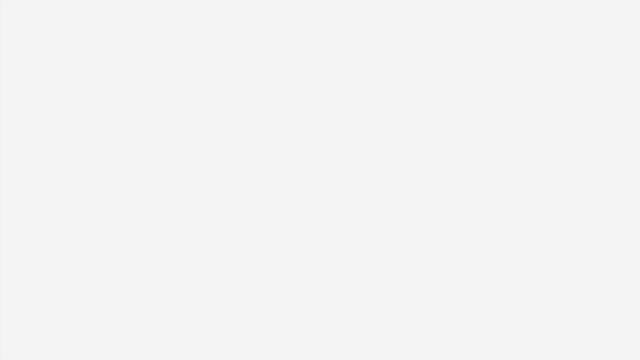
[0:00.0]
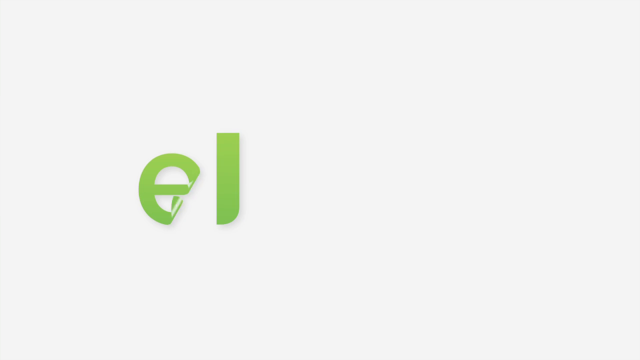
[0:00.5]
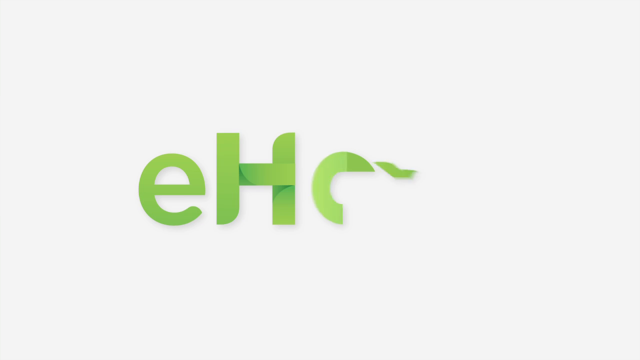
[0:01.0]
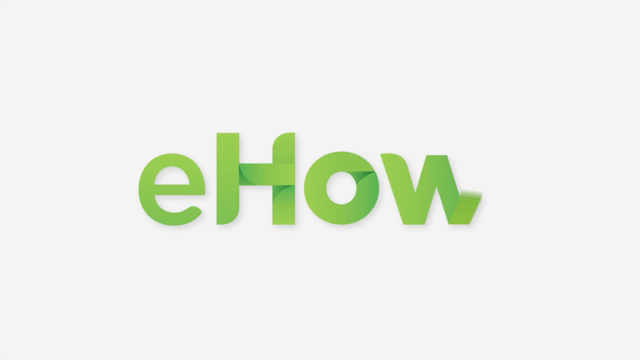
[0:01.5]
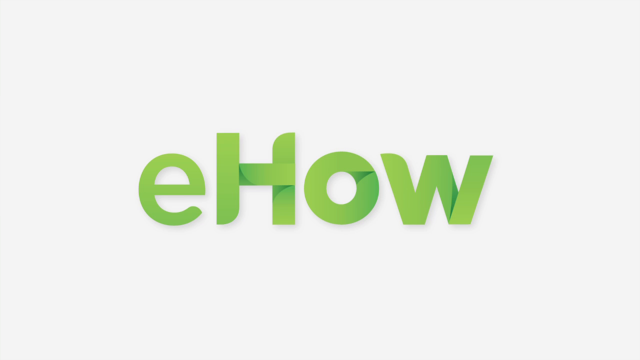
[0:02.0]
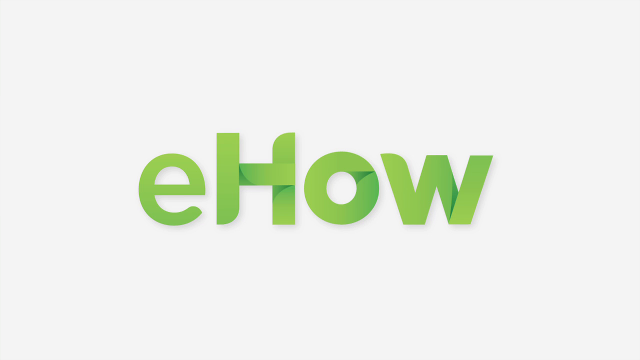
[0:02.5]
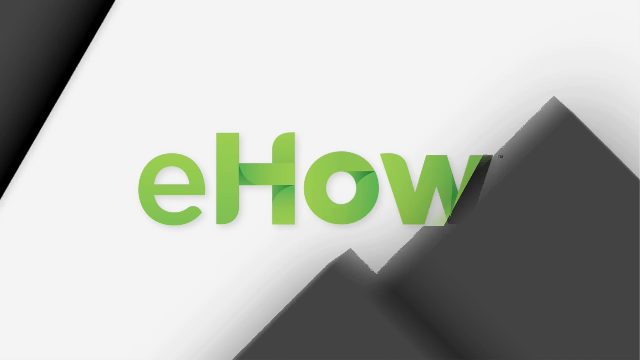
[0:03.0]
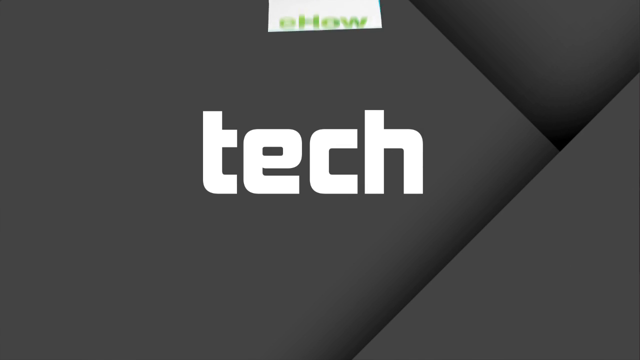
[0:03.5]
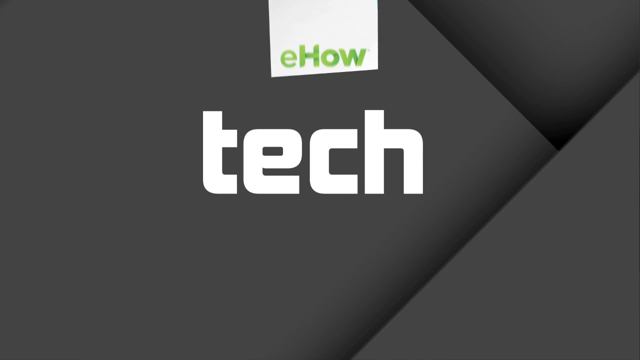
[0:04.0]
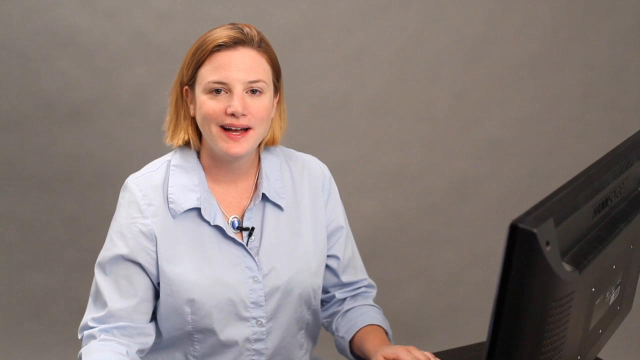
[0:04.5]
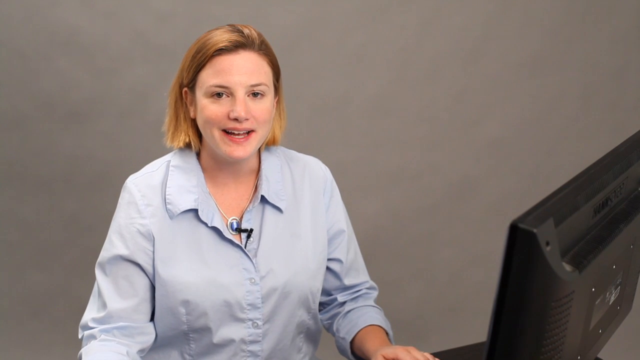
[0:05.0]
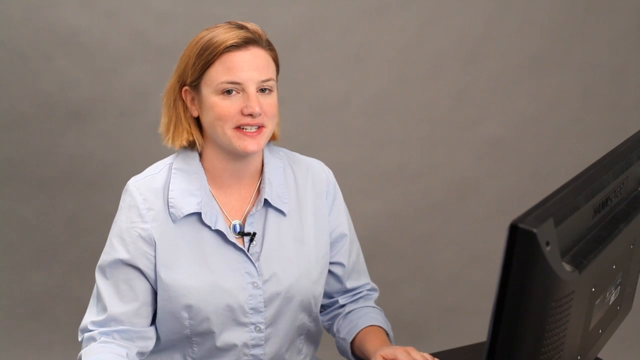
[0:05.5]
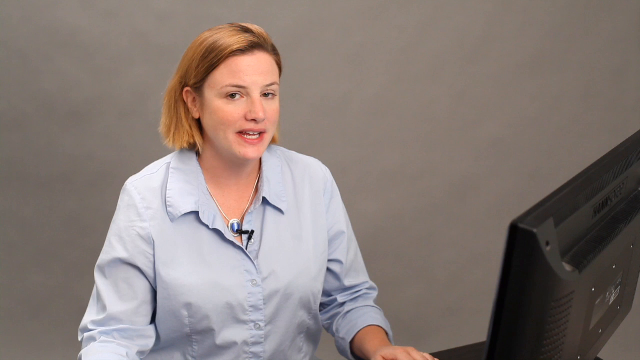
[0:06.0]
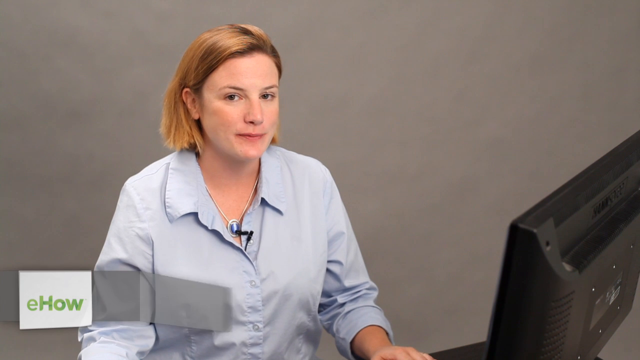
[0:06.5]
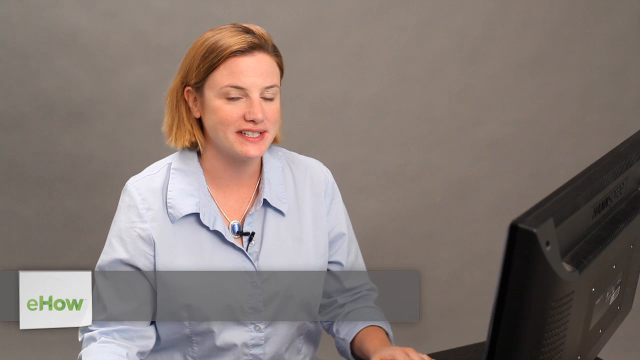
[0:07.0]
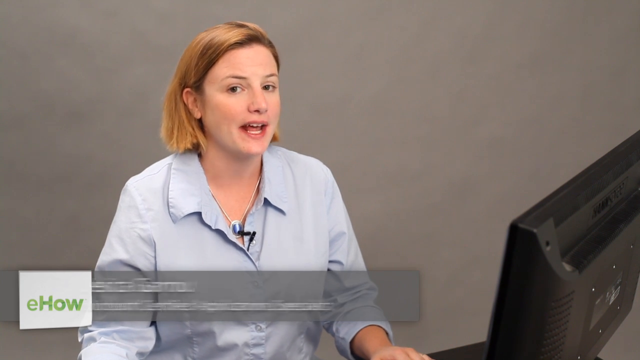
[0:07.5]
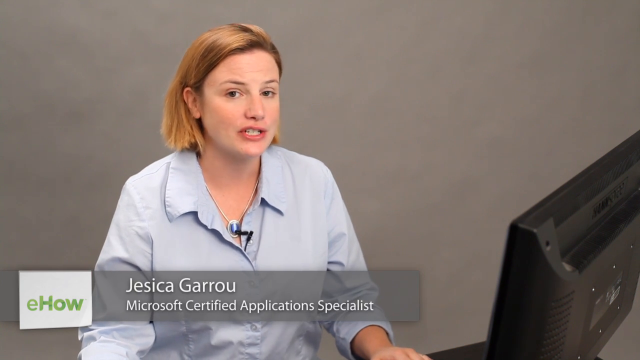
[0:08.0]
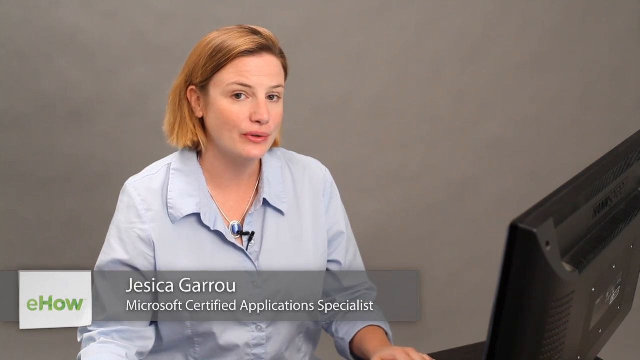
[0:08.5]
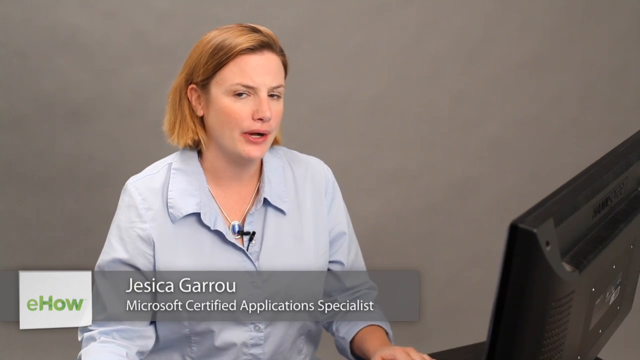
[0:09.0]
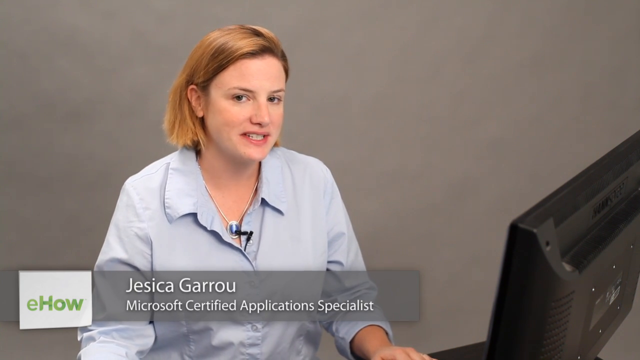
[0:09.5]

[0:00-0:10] The video opens on a completely white, empty background. Suddenly a bunch of green letters, an e, an h, an o and a w, come flying in and form the word "ehow". The screen then transitions to a black background made of various folds, which displays the word "tech" before transitioning to a host. The host is named Jessica Garrow, and she is a Microsoft Certified Application Specialist.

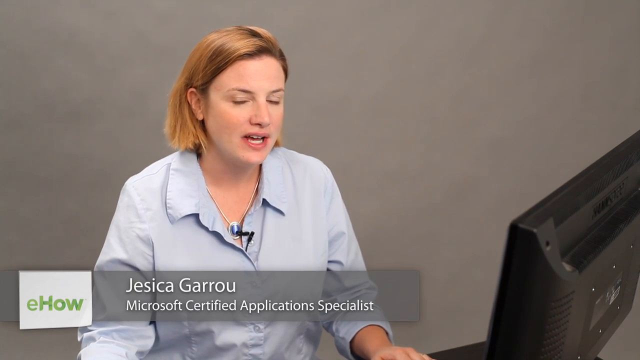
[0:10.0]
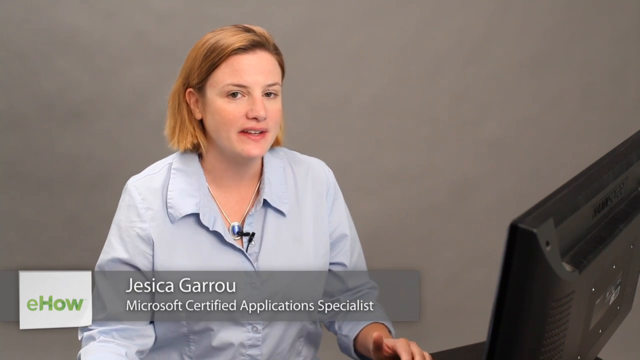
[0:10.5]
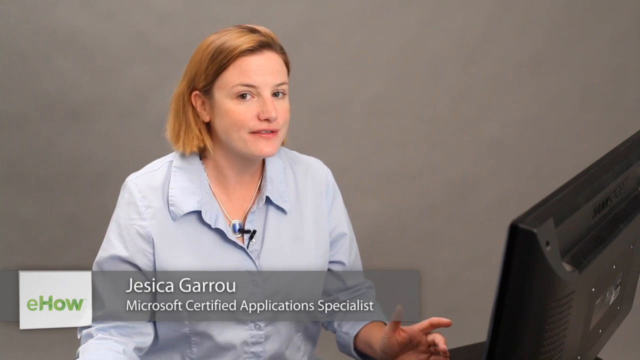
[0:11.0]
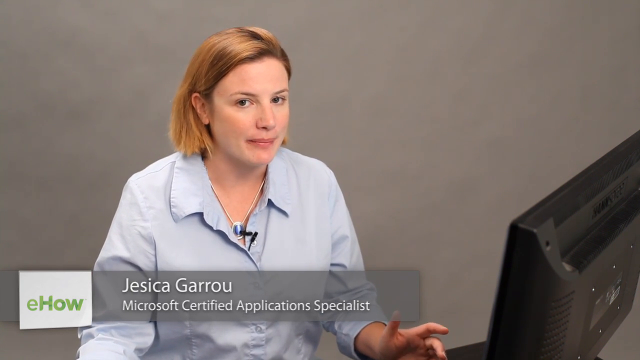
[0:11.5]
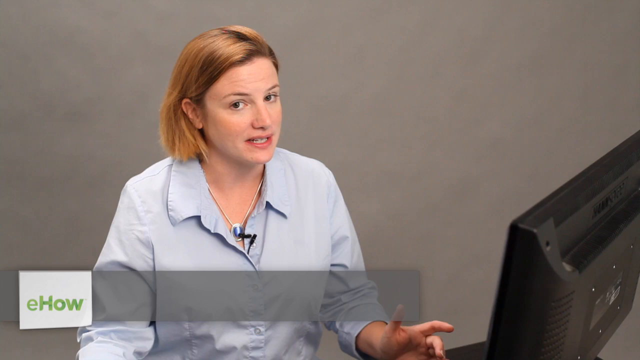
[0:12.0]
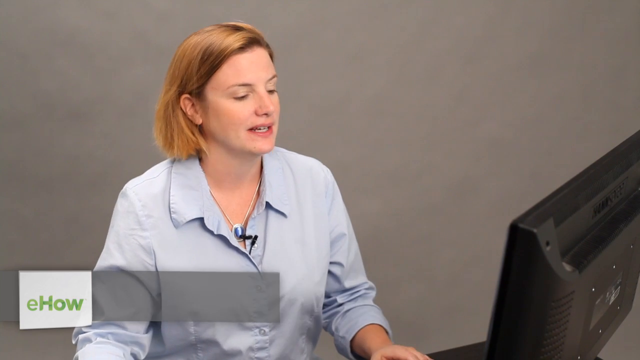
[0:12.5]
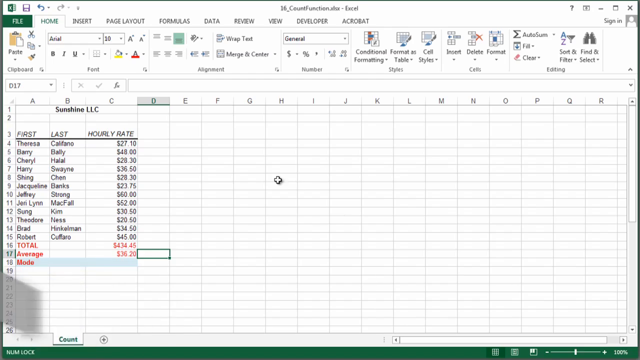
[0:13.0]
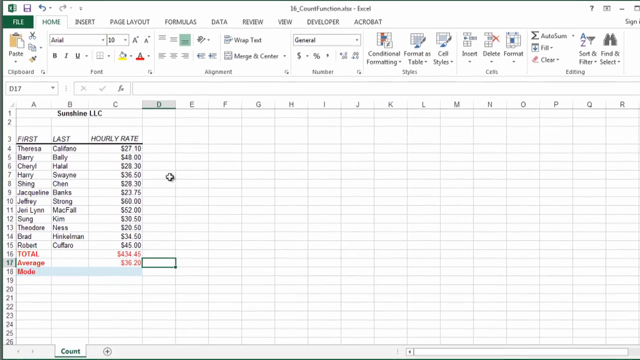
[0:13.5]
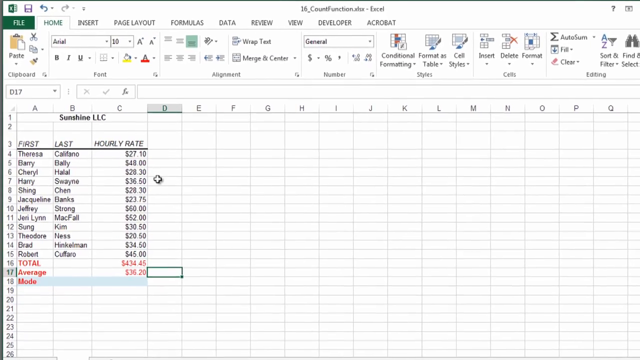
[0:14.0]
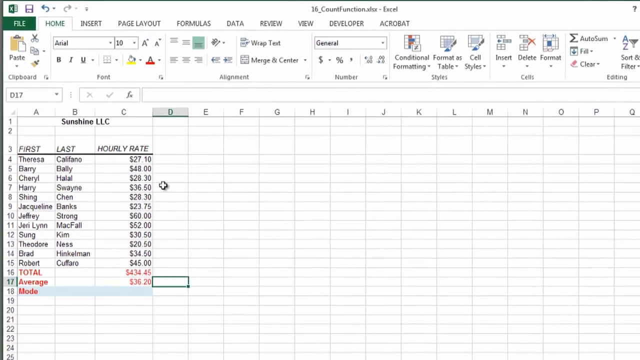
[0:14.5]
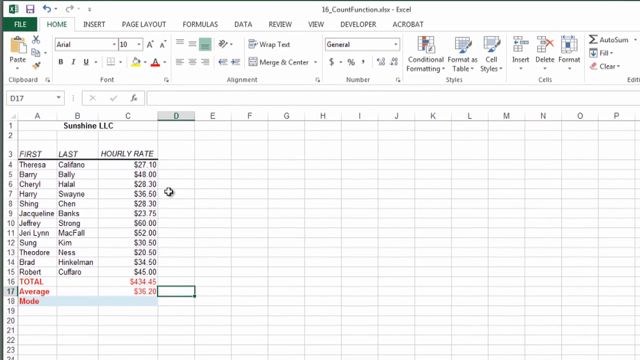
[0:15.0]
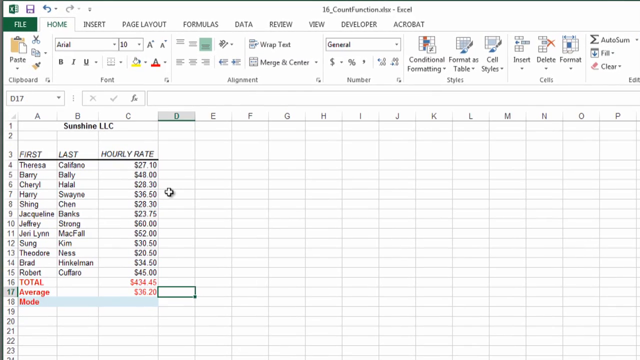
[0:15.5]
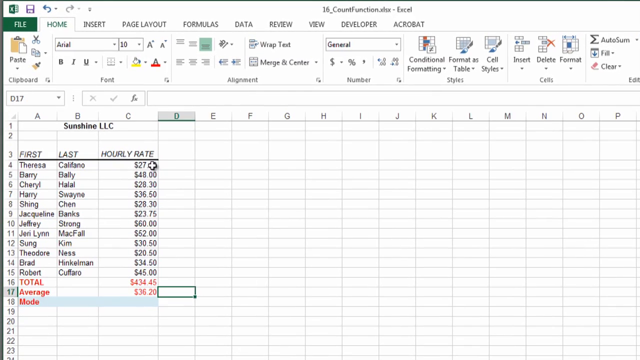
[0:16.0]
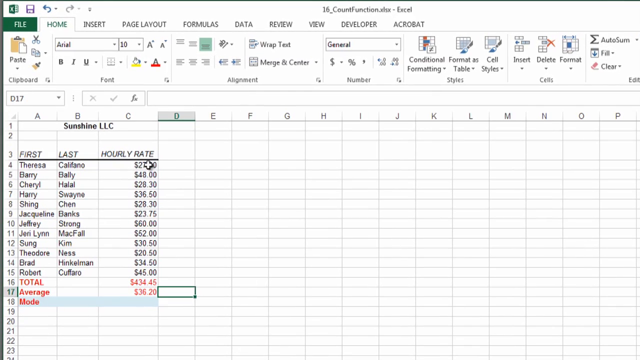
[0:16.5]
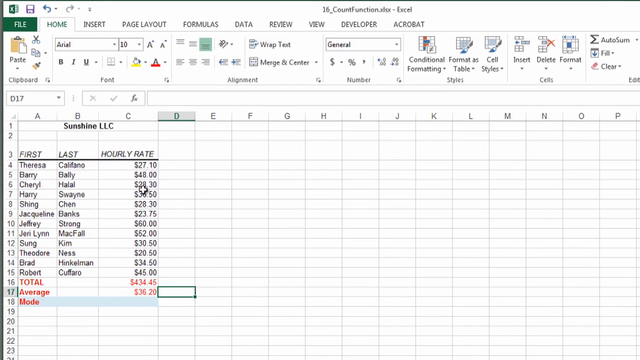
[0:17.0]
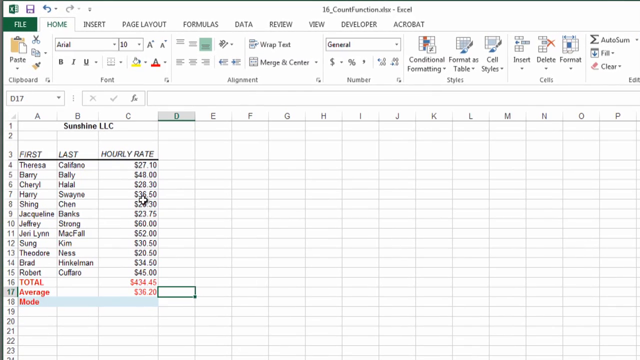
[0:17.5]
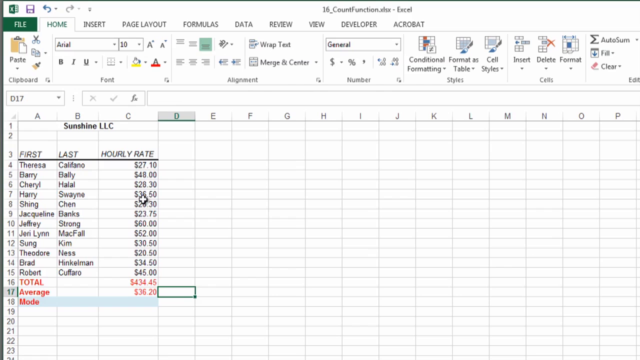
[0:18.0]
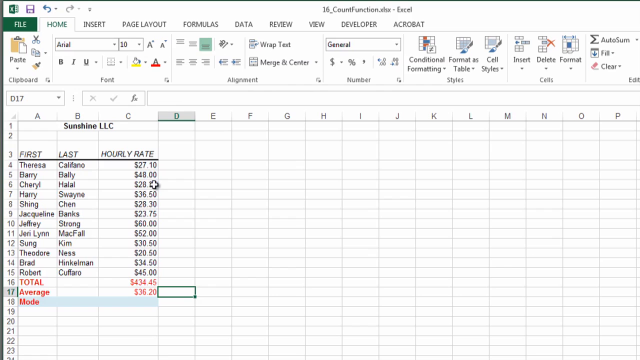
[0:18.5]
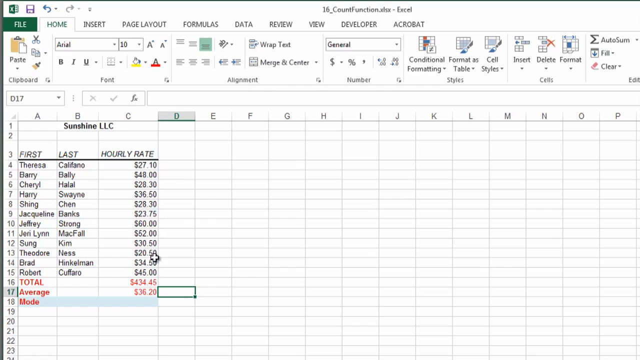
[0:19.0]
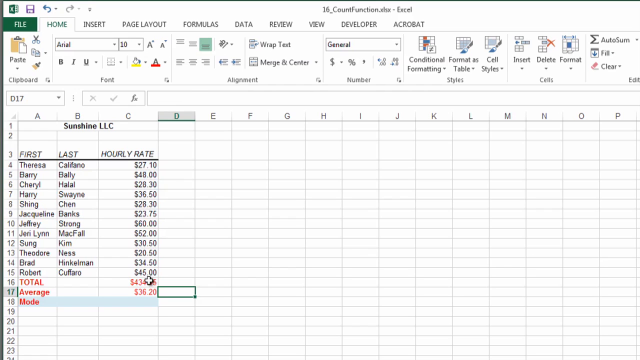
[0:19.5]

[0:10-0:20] A woman is in front of a gray background. A visual on the bottom left contains the word "eHow" on a white background and provides information on the host: she is named Jessica Garrow and is a Microsoft Certified Applications Specialist. She wears a light blue blouse and a blue pendant around her neck. In front of her is a black monitor facing her. She speaks directly to the camera, then turns her body towards the monitor, and the screen transitions to a Microsoft Excel window.